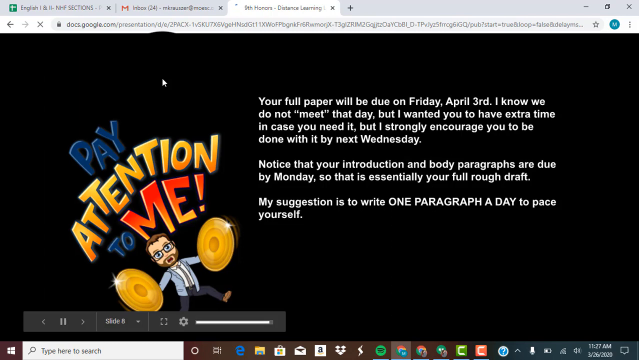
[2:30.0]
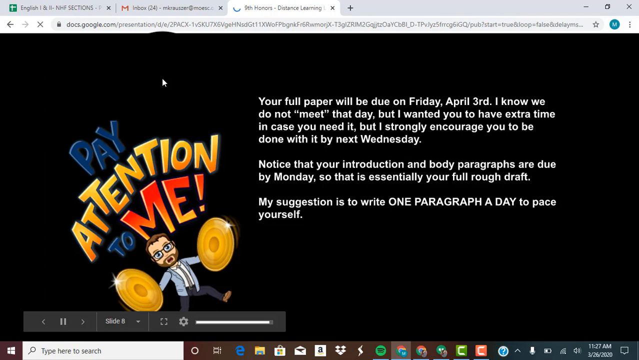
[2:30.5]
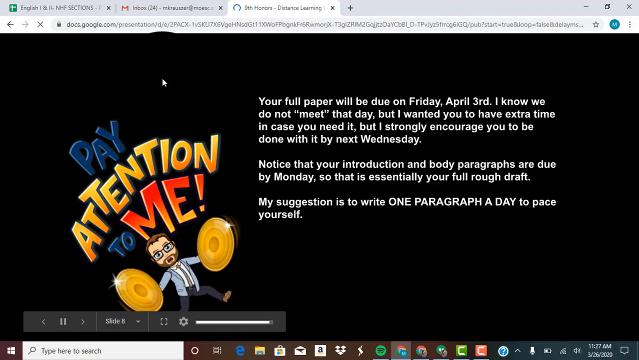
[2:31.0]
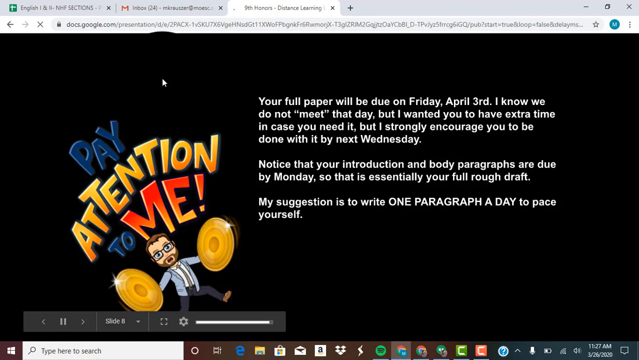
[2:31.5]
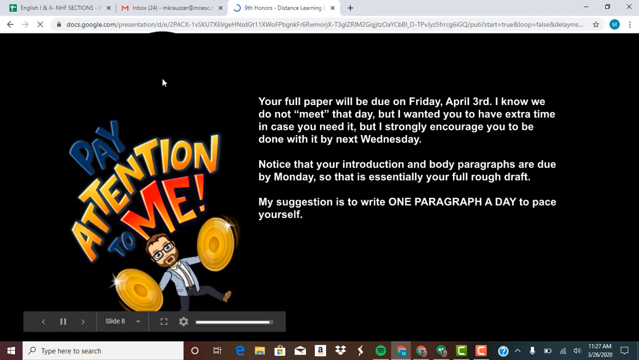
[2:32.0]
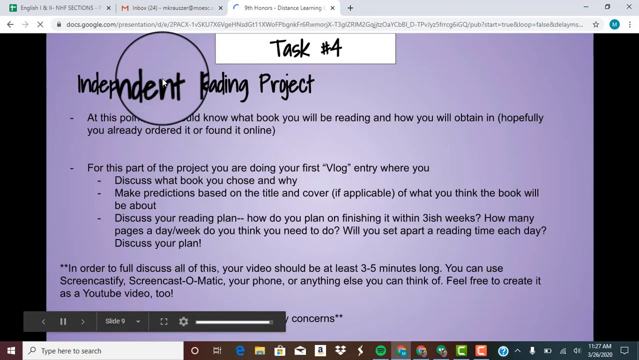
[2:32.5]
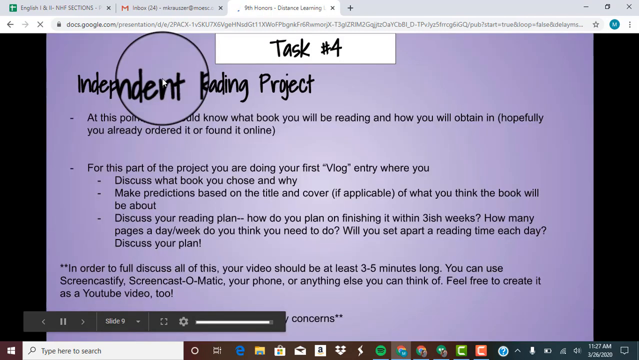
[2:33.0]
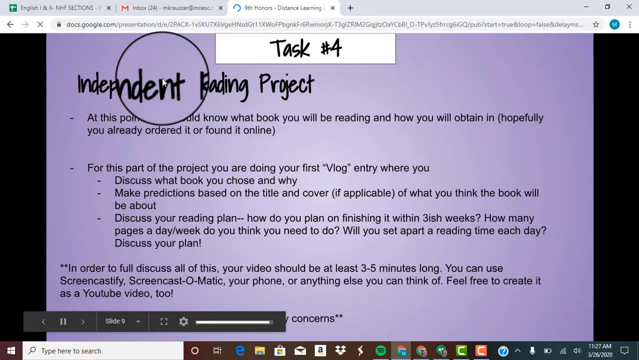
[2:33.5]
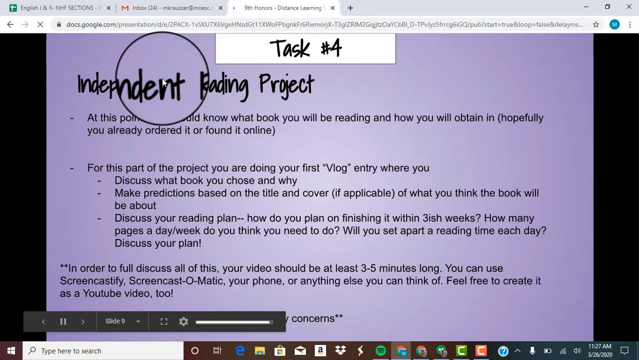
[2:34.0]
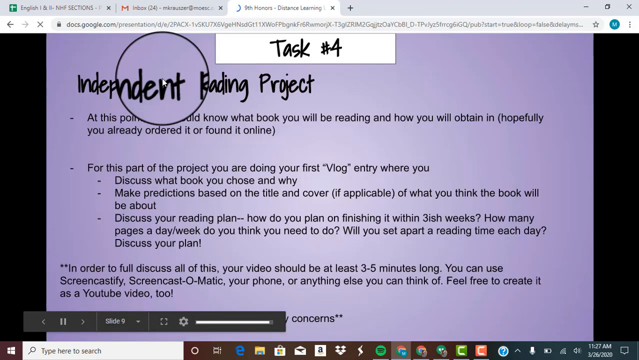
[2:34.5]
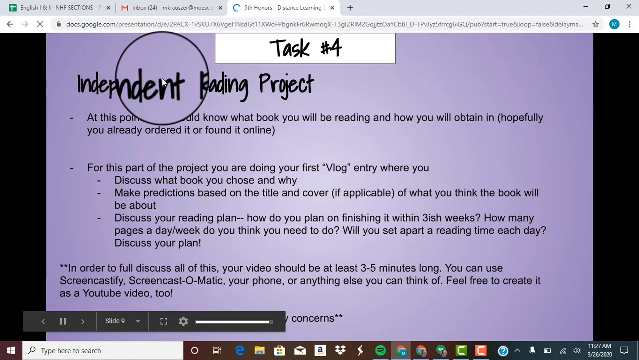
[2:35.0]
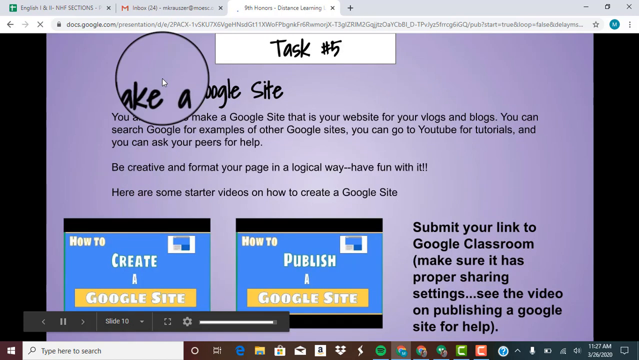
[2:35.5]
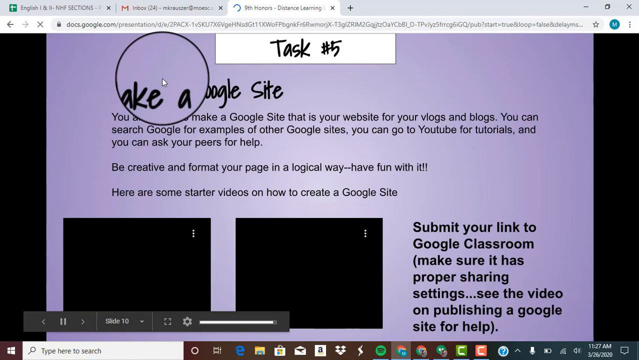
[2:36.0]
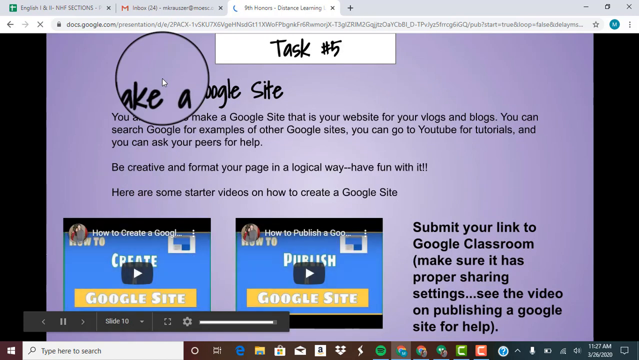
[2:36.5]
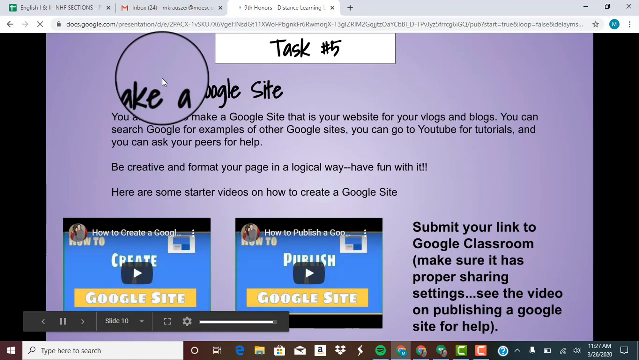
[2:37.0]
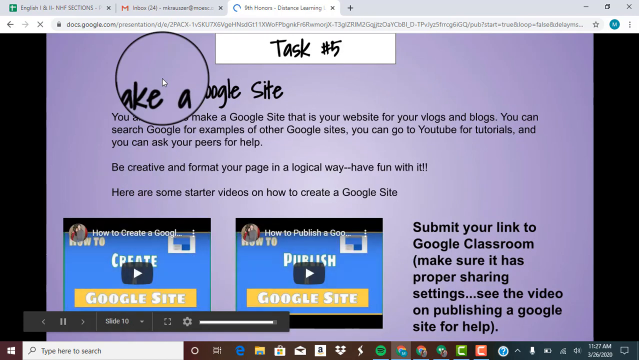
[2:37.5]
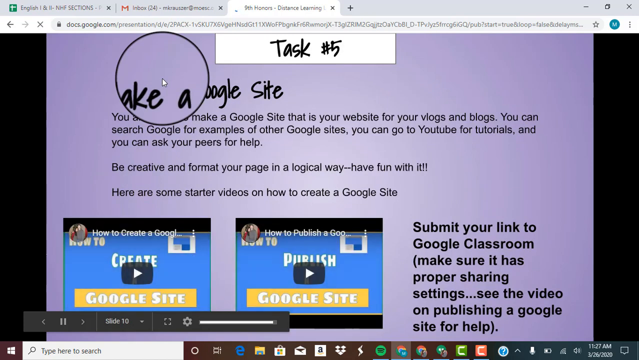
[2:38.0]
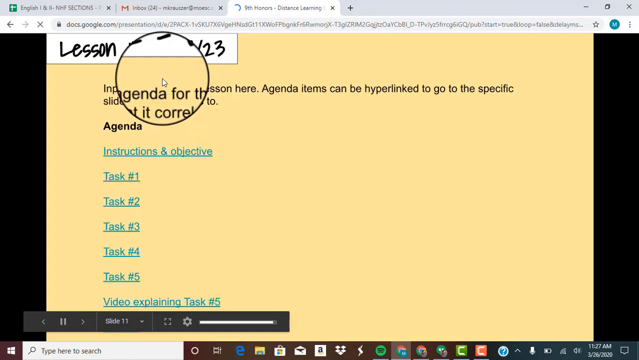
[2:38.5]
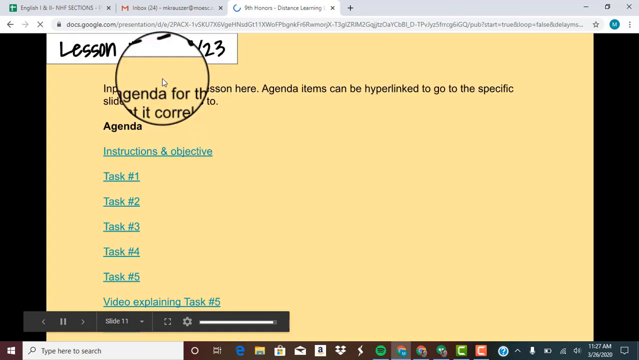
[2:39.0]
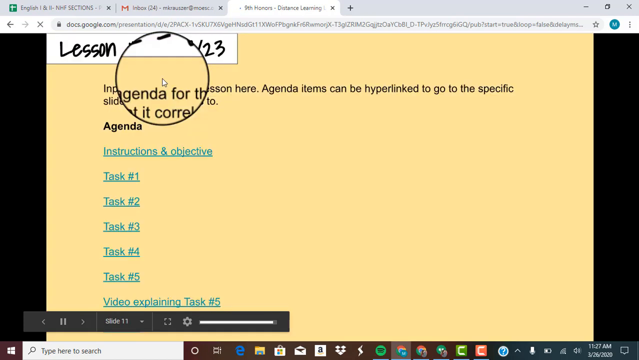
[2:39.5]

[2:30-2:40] Google Chrome shows a tab bar with a Google Sheet, Gmail, and the current page, a presentation on docs.google.com according to the address bar. The page has a black background with a cartoon of a man with short brown hair and rectangular glasses in a suit, holding two cylinder cymbals, with large text above him reading "pay attention to me." White text reads: "your full paper will be due on Friday, April 3rd. I know that we do not meet that day, but I wanted you to have extra time in case you needed it. But I strongly encourage you to be done with it by next Wednesday. Notice that your introduction and body paragraphs are due by Monday. So that is essentially your full rough draft. My suggestion is to write one paragraph a day to pace yourself." The page then changes; the mouse cursor is in a transparent circle with a black outline. In the middle of the screen, a white rectangle reads "task number four" in black, with "independent reading project" underneath. Very quickly the page moves to task number five, still with a purple background and white rectangle, apparently reading "make a Google site," though the circle covers it; there appear to be two videos below. Next is a yellow page reading "lesson" followed by something, then back to the black page, very quickly back to the purple page reading "independent reading project," back to "make a Google site," and back to the yellow page, where the circle again covers the text after "lesson." Finally the black page returns once again.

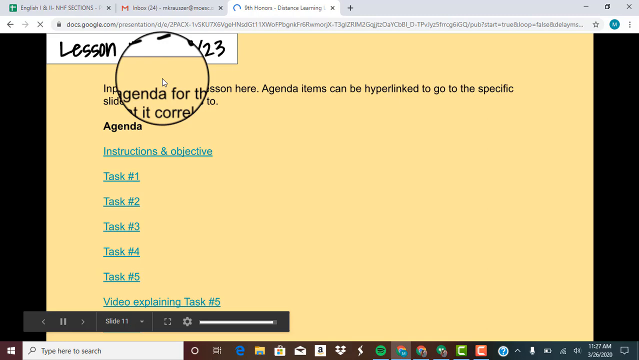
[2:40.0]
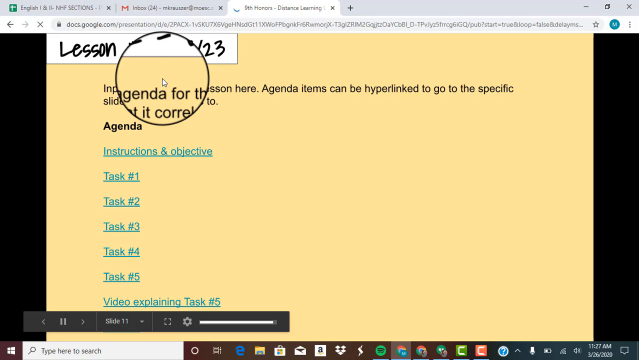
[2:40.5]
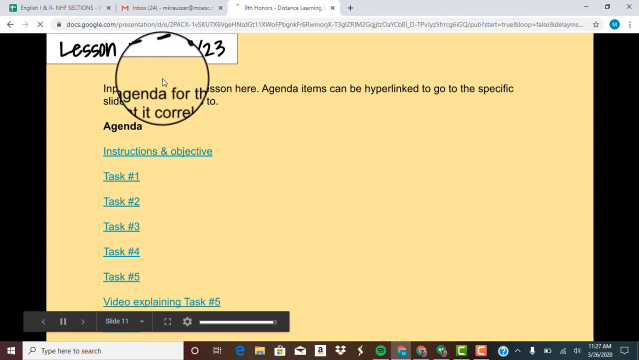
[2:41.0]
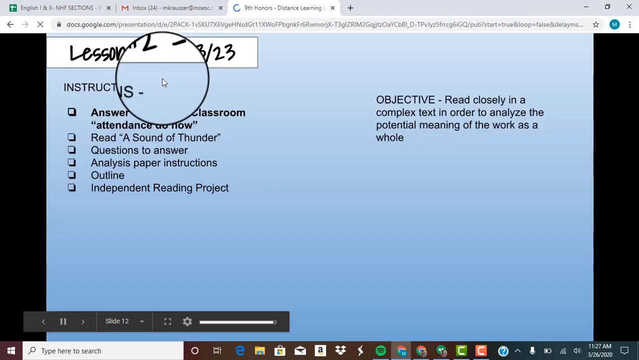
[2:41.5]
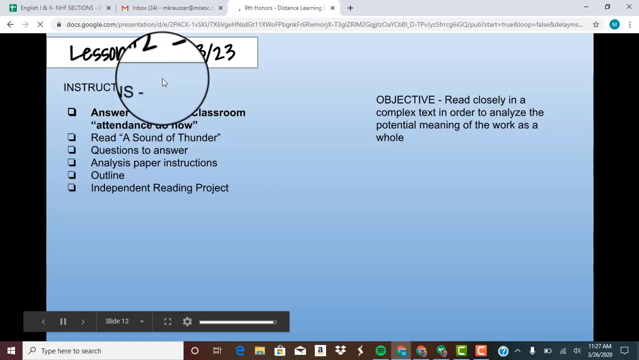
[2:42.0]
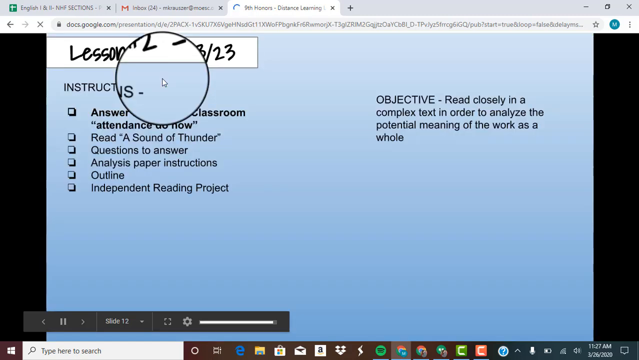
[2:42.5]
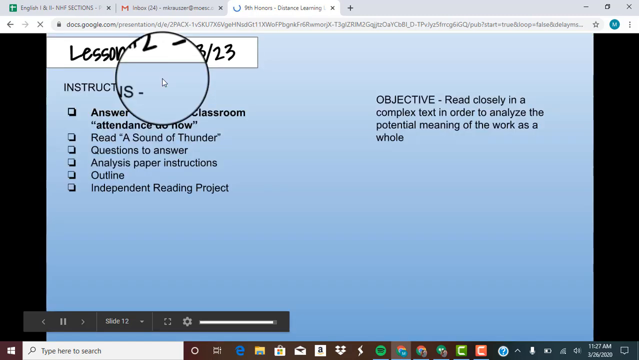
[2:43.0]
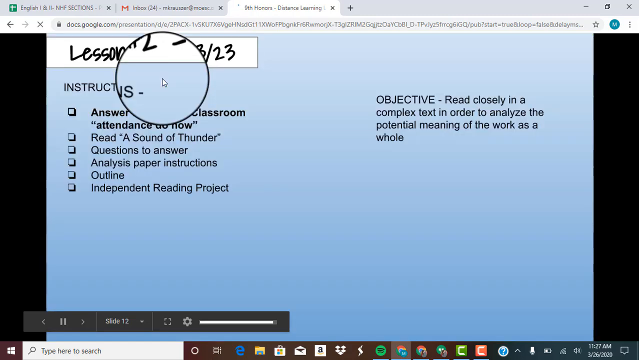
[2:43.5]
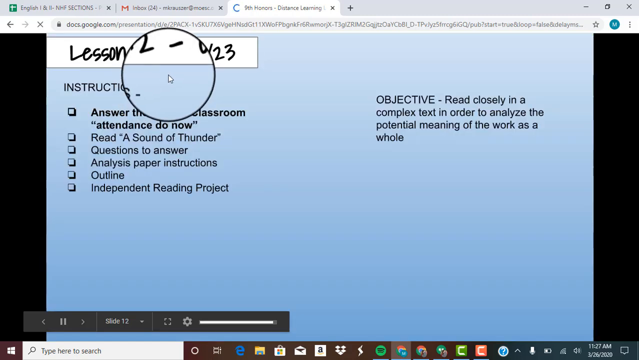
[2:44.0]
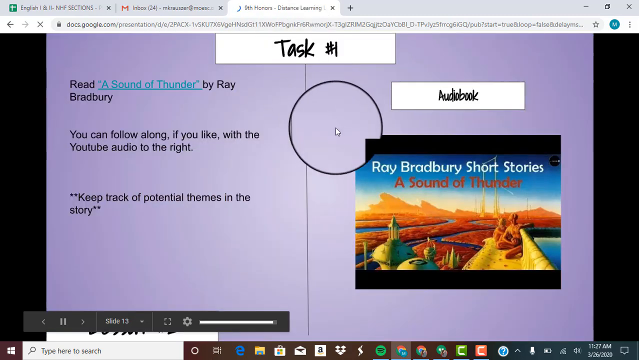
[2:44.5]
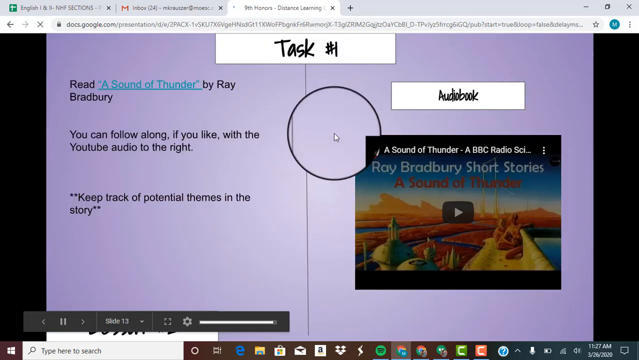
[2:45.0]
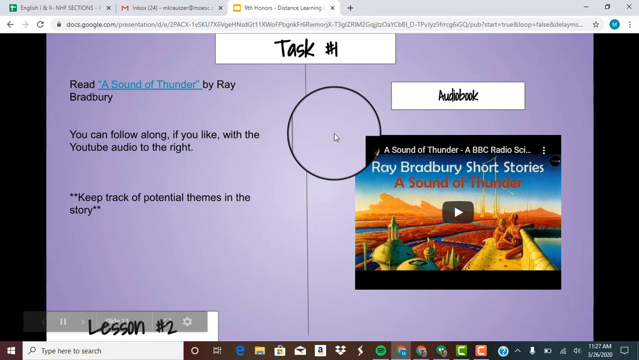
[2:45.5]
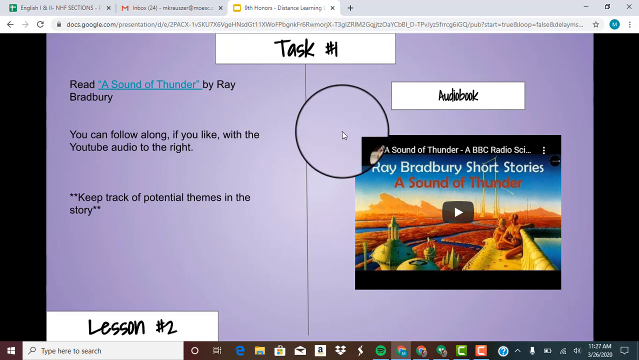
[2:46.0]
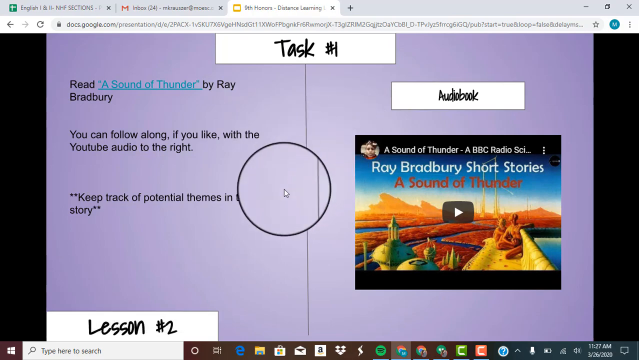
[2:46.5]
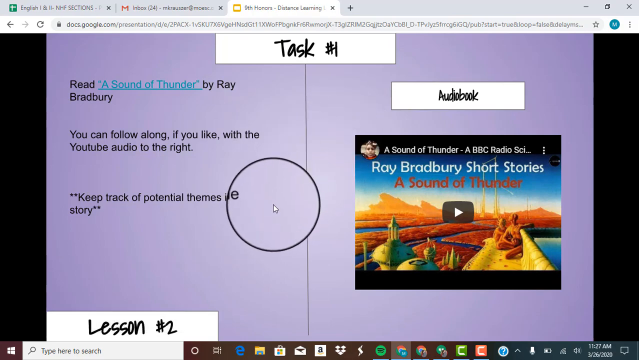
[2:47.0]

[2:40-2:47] Some kind of Google presentation is open in Chrome, with several tabs in the browser bar: Google Sheets on the left, Gmail in the middle, and the current page on the right. The page has a yellow background with multiple links on it, and in the upper left-hand corner a white rectangle reads "lesson" followed by something covered by the mouse. The mouse is highlighted by a large clear circle outlined in black that kind of zooms in. The page then moves to a blue page while the mouse never moves; it reads "lesson" followed by something very hard to read. Next is a purple page with a white rectangle in the middle reading "task number one." To the left, text reads "read a sound of thunder by Ray Bradbury you can follow along if you like to the YouTube audio to the right, keep track of potential themes in the story." On the right is a white rectangle reading "audio book," with a video of the audio book. The mouse then moves down slightly to the left.